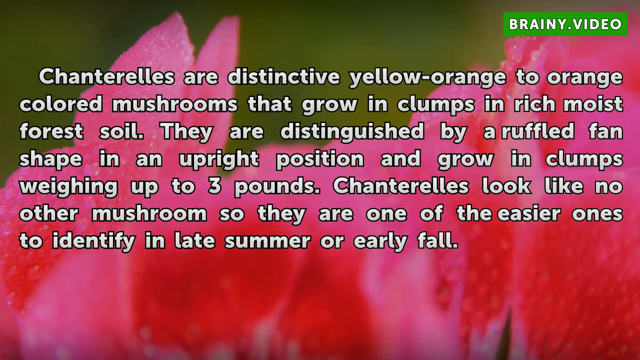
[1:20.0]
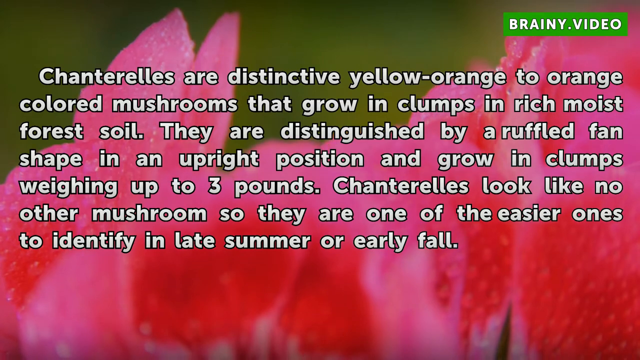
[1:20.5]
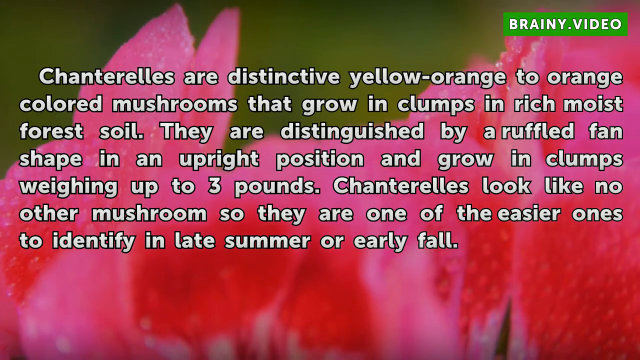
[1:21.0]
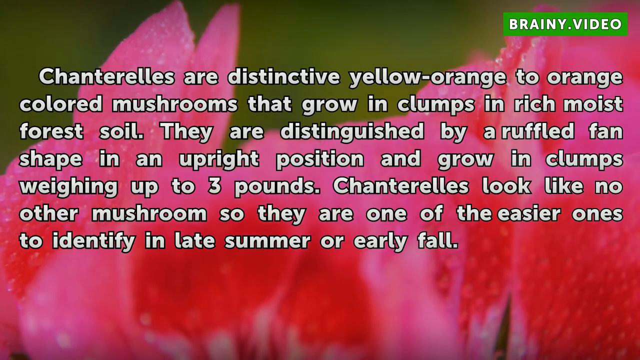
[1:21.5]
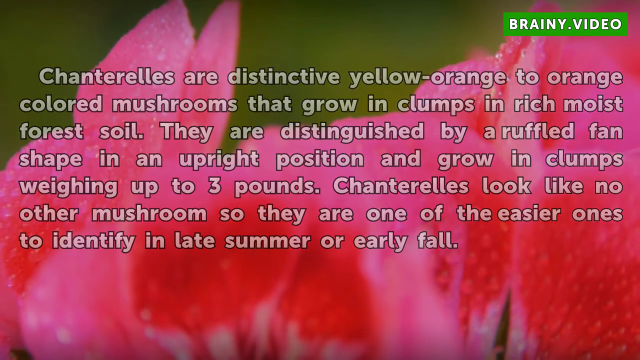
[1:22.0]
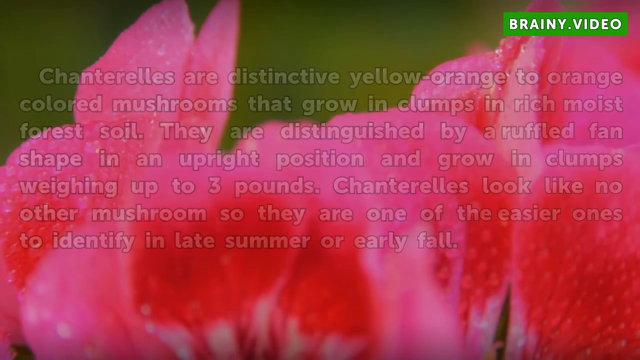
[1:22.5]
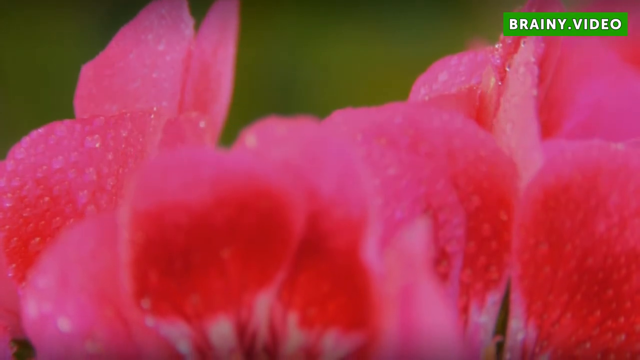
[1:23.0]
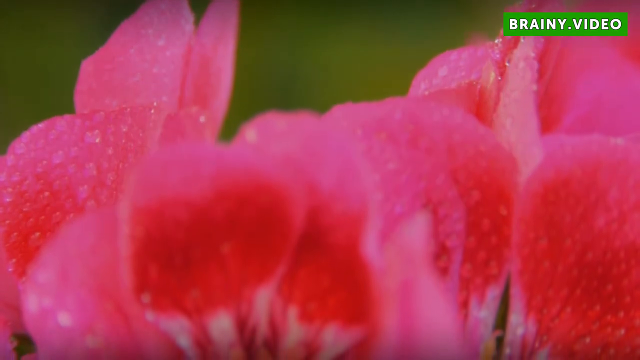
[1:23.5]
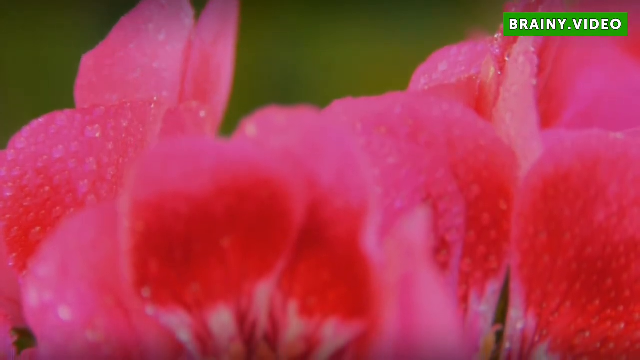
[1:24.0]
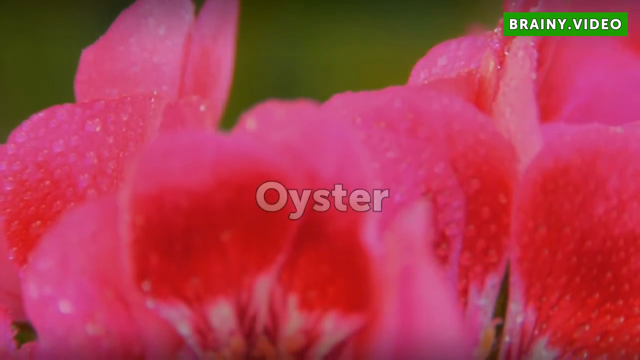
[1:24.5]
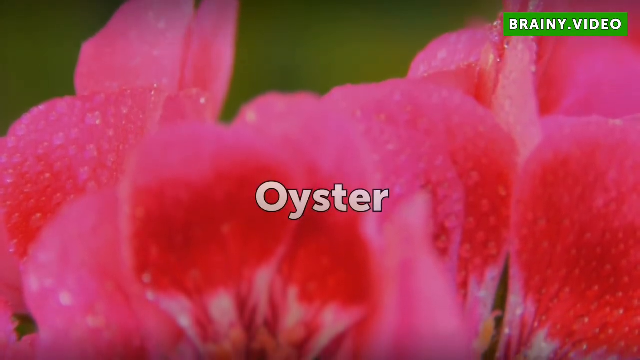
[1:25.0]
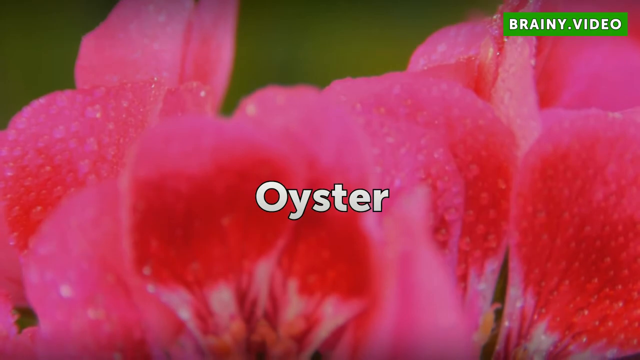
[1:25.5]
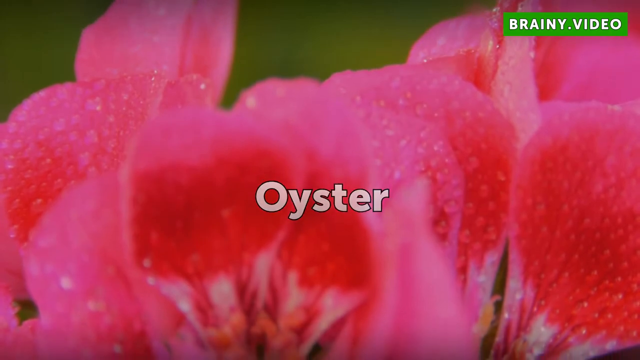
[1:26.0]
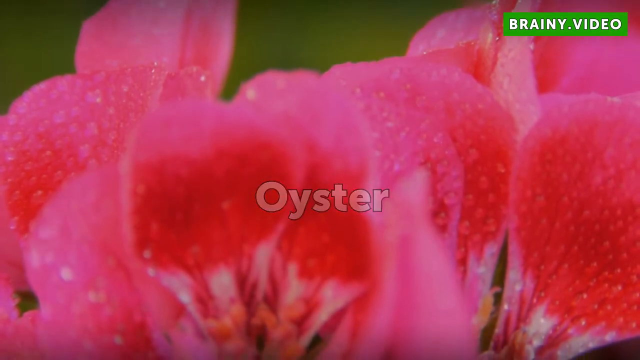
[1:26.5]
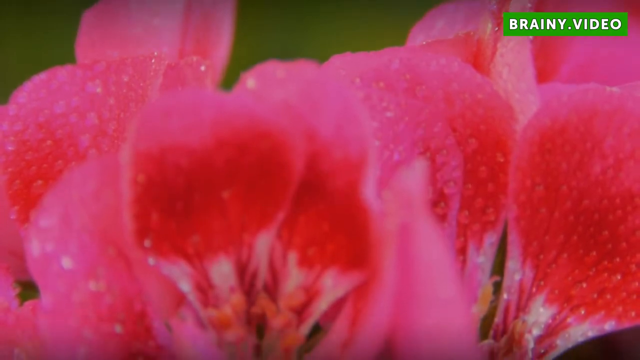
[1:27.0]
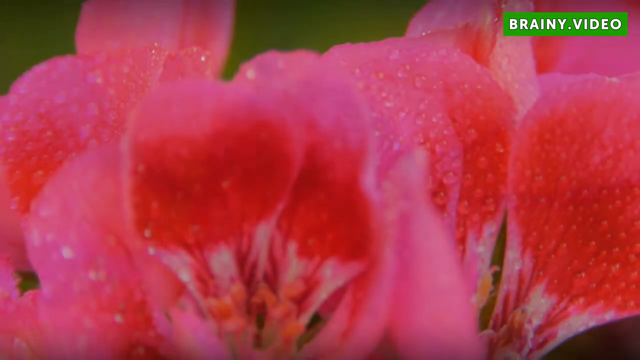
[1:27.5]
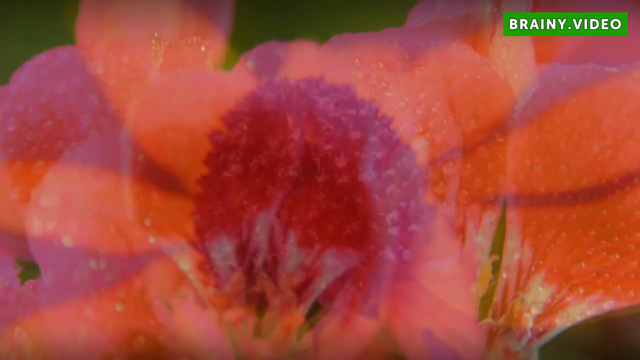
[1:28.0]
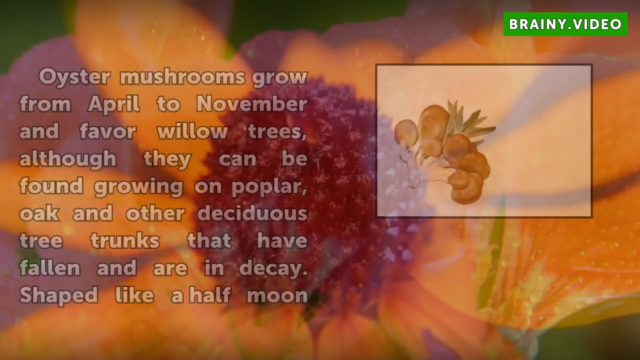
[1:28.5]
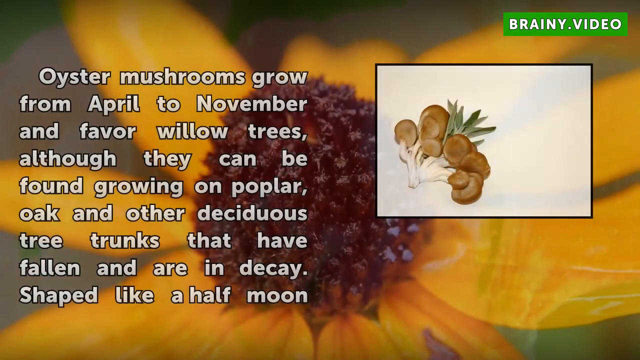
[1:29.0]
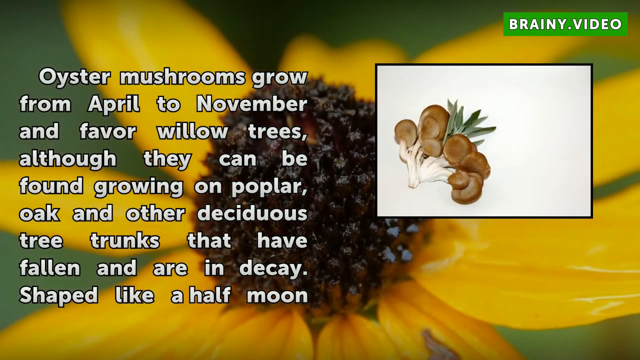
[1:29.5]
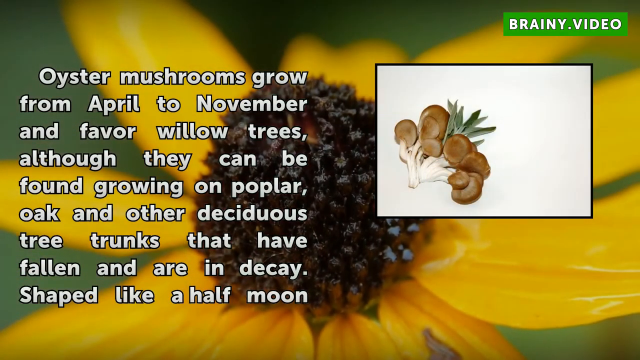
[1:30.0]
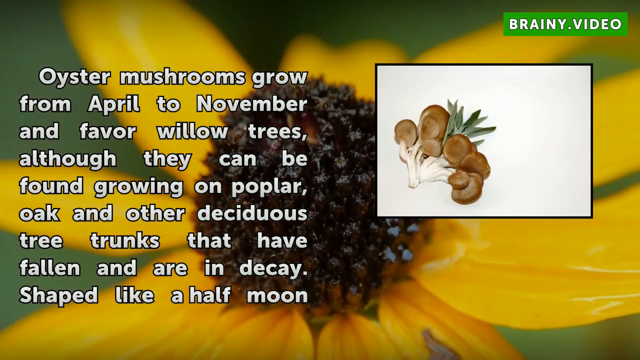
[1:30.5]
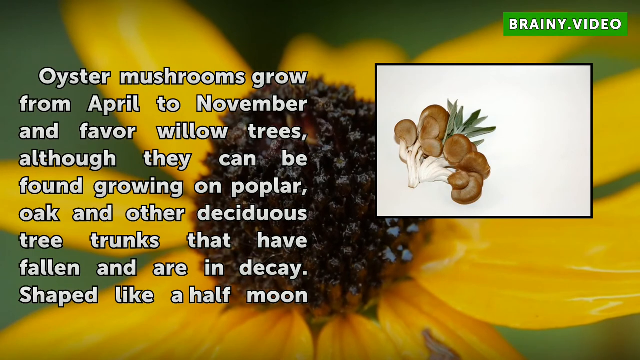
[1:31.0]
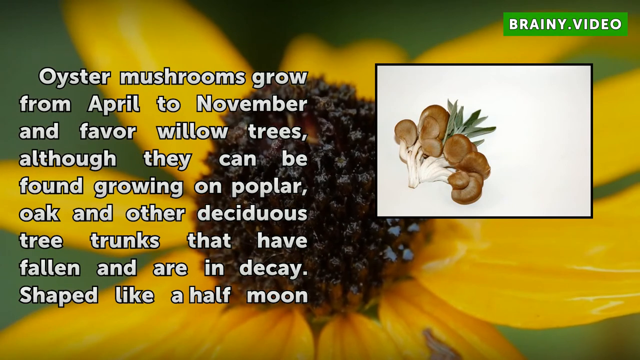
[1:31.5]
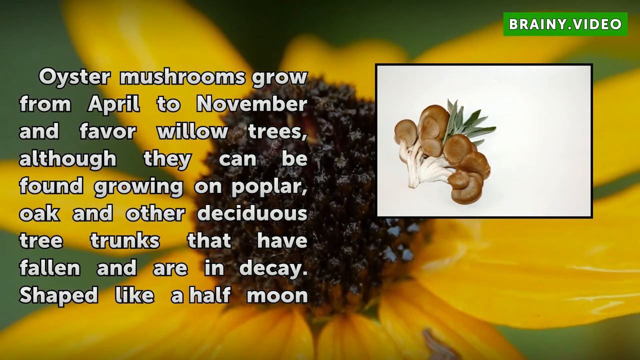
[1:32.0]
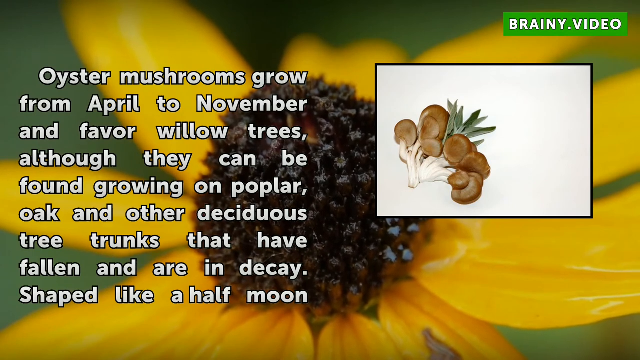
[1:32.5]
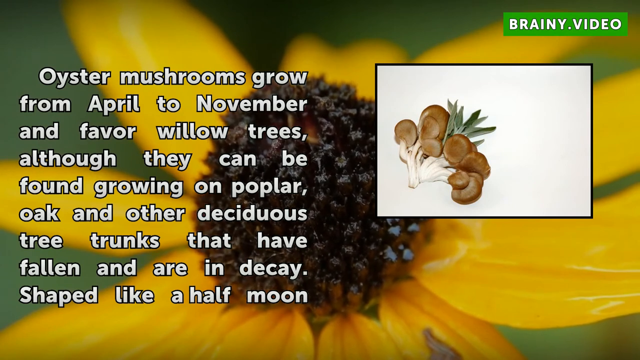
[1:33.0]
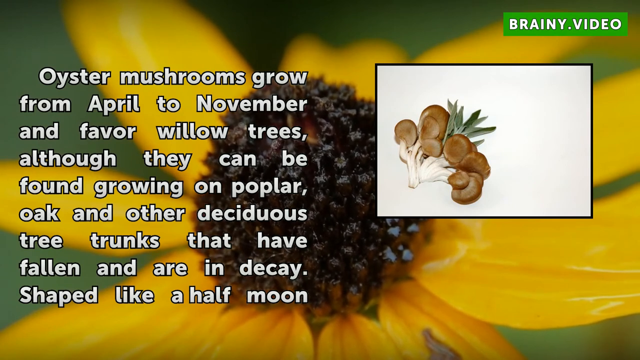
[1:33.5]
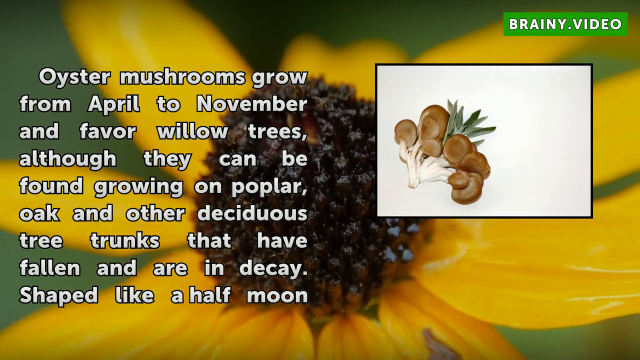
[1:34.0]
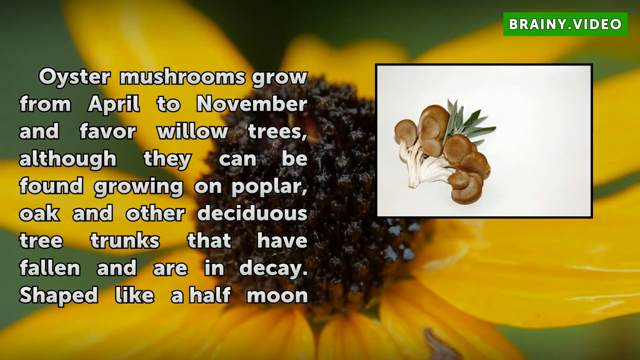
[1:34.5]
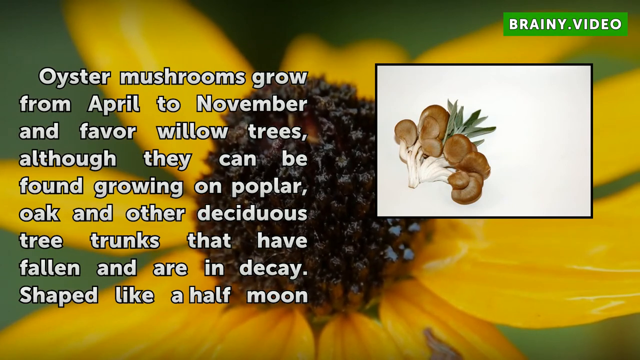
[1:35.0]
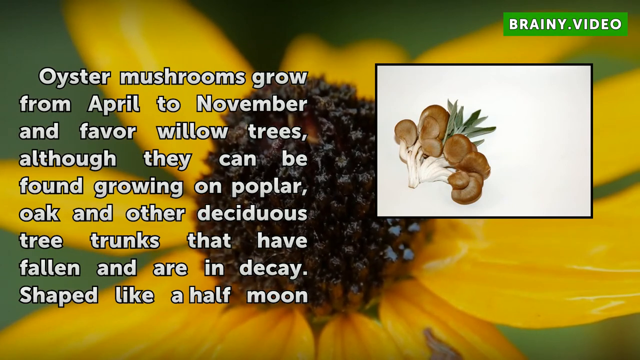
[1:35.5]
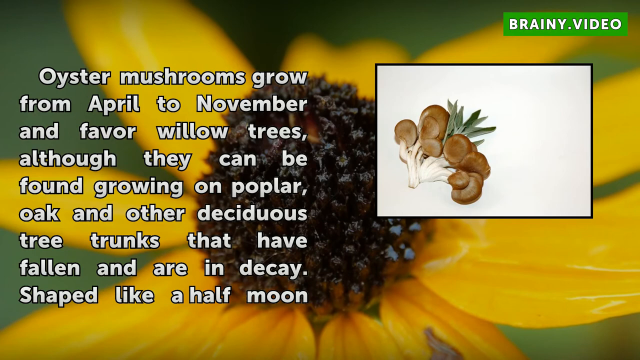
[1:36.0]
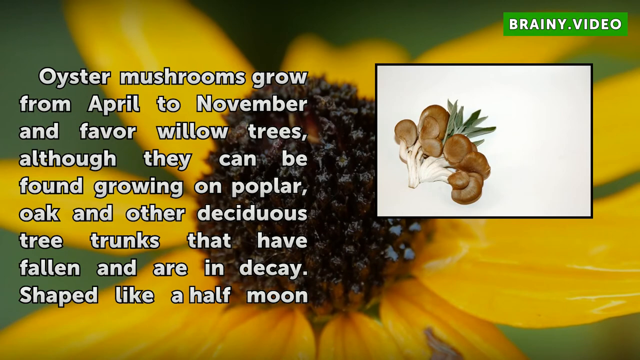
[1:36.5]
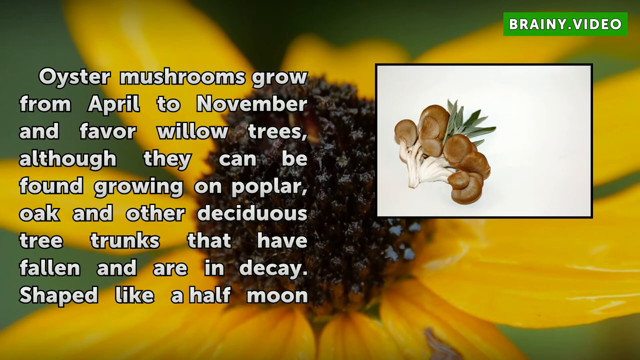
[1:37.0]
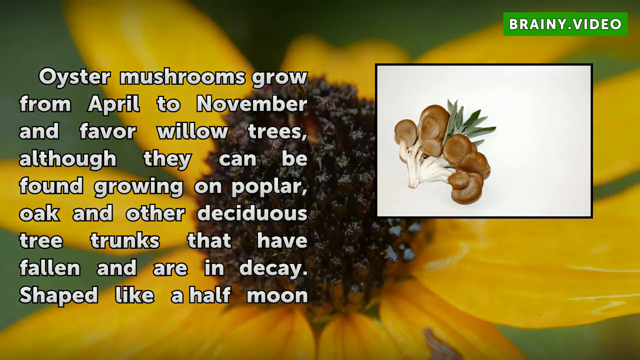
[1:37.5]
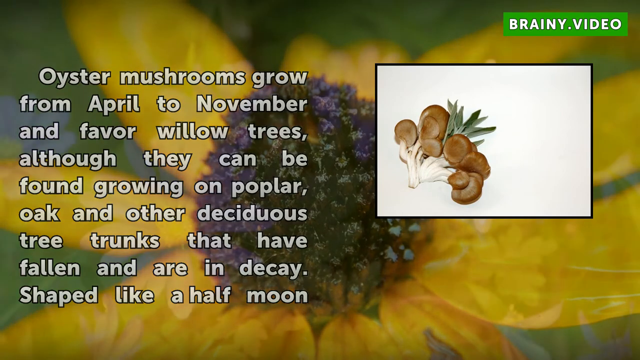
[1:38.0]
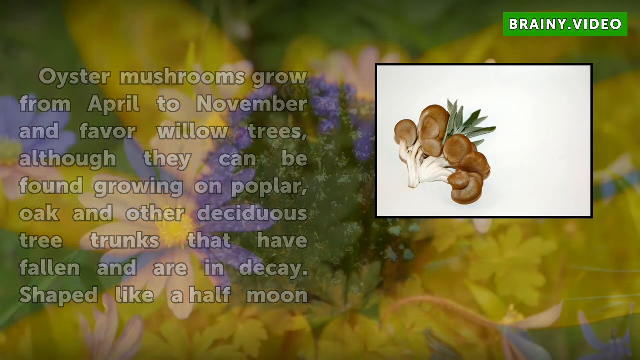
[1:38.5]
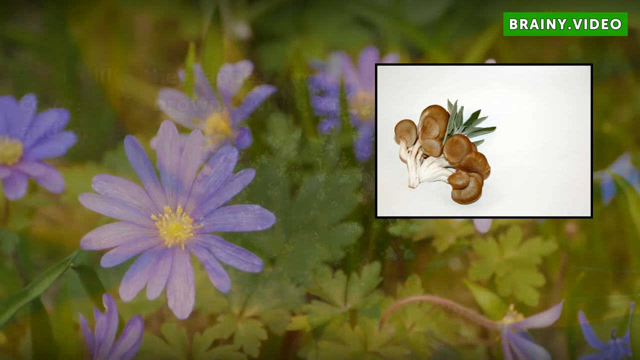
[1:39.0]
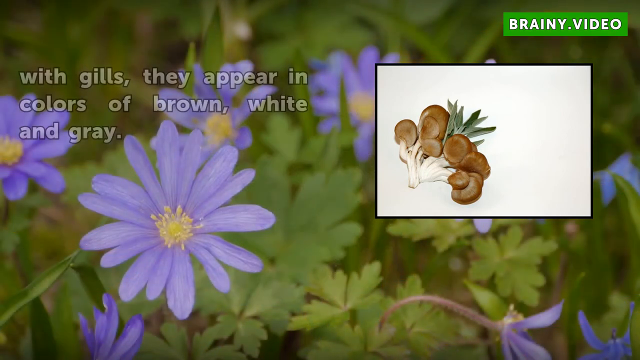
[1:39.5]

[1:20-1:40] A pink flower is in the background, with white words on the screen in front of it: "Chanterelles are distinctive yellow-orange to orange-colored mushrooms that grow in clumps in rich, moist forest soil. They are distinguished by a ruffled fan shape in an upright position and grow in clumps weighing up to three pounds. Chanterelles look like no other mushrooms, so they are one of the easier ones to identify in late summer or early fall." The text disappears, leaving the pink flower petals in the background. The word "oyster" appears on the screen, and then the background shows a yellow-petaled flower with dark black pistils in its center. New text describes the oyster mushroom: "oyster mushrooms go from April to November and favor willow trees, although they can be found growing on popular oak and other deciduous tree trunks that have fallen and are in decay, shaped like a half-moon." An image of oyster mushrooms appears to the right, showing little round brown caps with white stems, with what looks like something green growing out of the middle of them. The rest of the description then appears: "with gills that appear in color of brown, white, and gray."